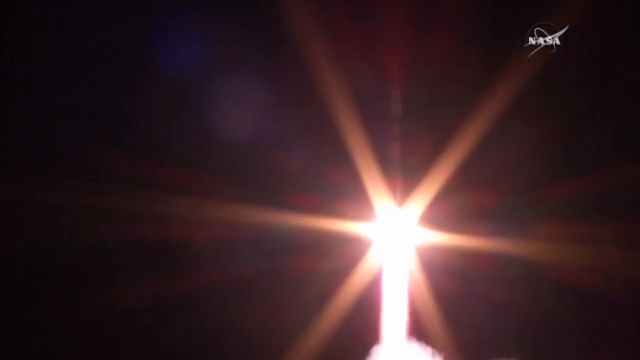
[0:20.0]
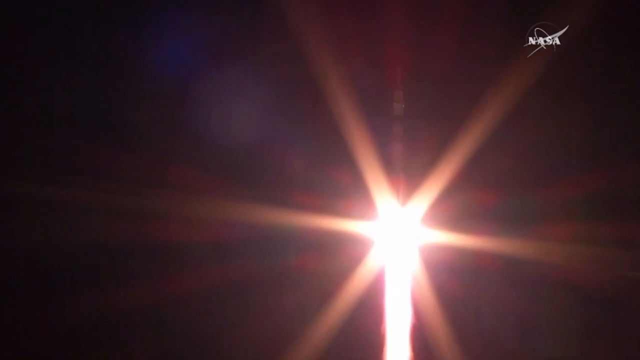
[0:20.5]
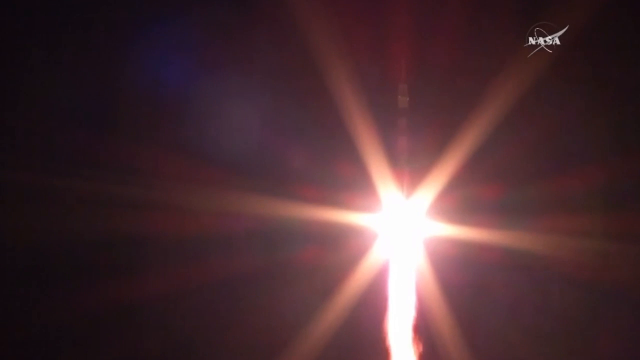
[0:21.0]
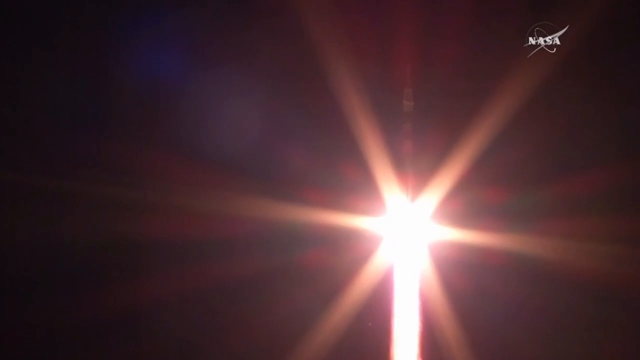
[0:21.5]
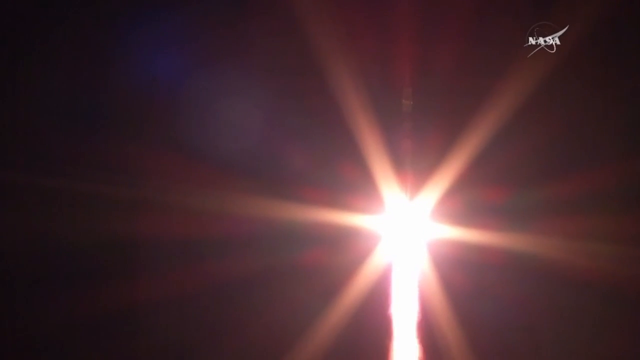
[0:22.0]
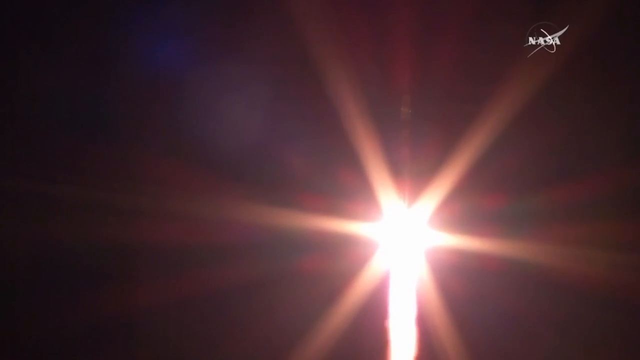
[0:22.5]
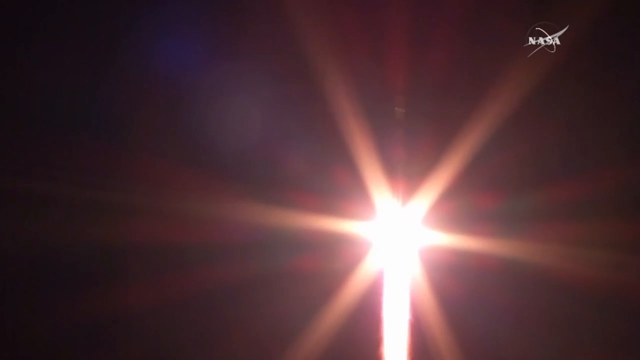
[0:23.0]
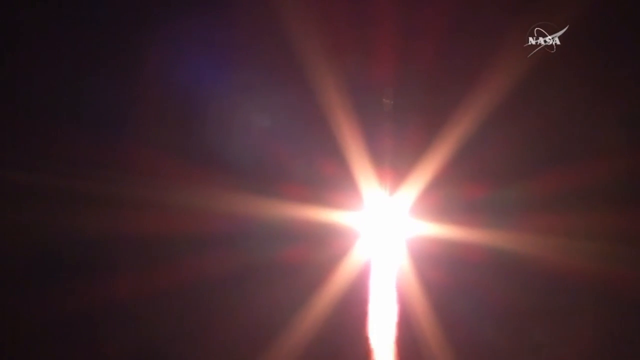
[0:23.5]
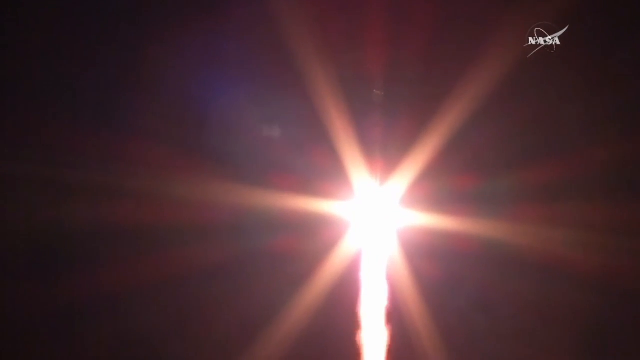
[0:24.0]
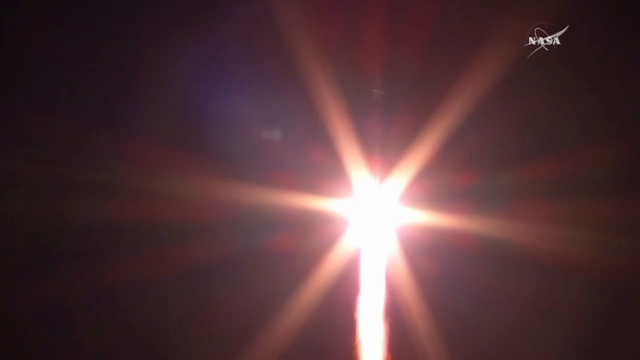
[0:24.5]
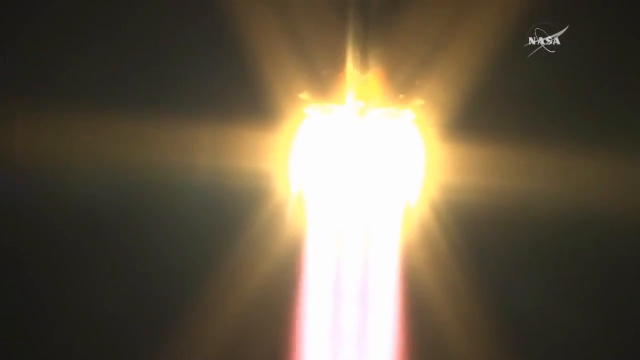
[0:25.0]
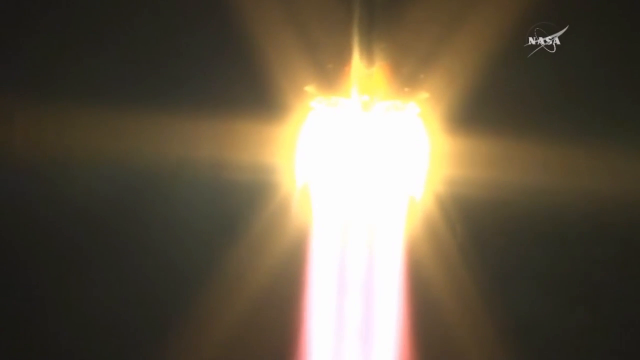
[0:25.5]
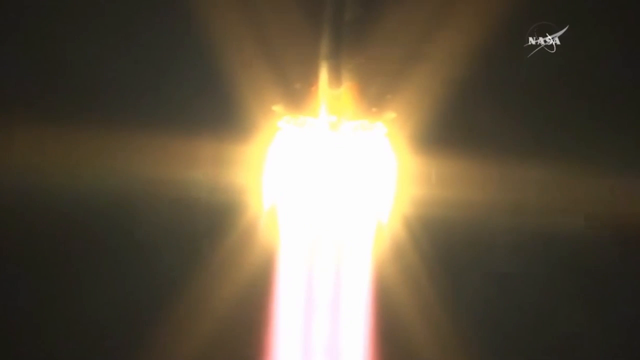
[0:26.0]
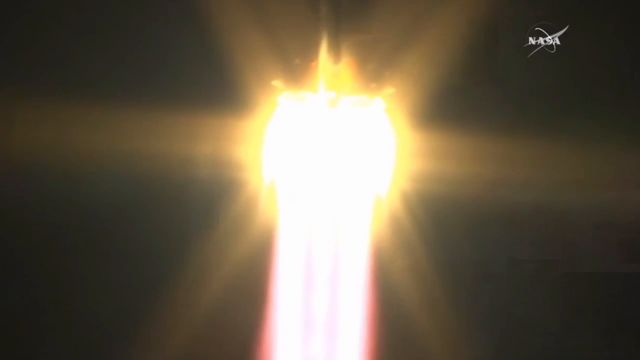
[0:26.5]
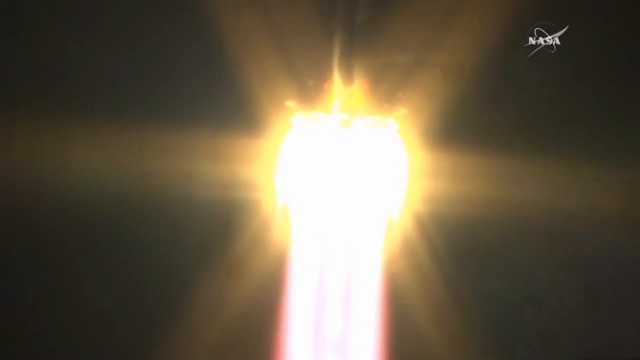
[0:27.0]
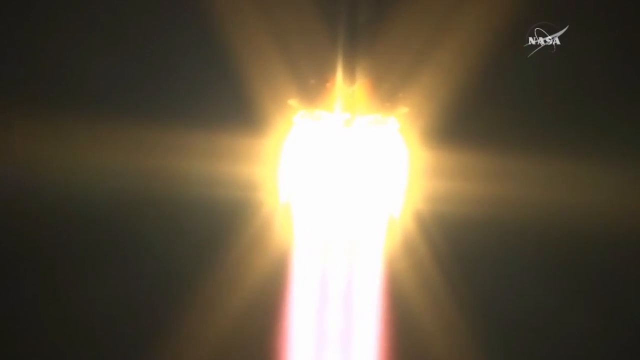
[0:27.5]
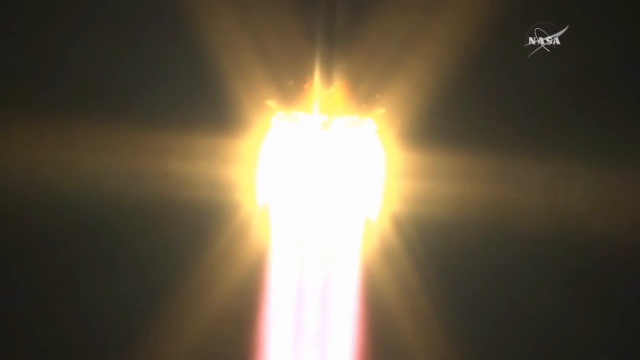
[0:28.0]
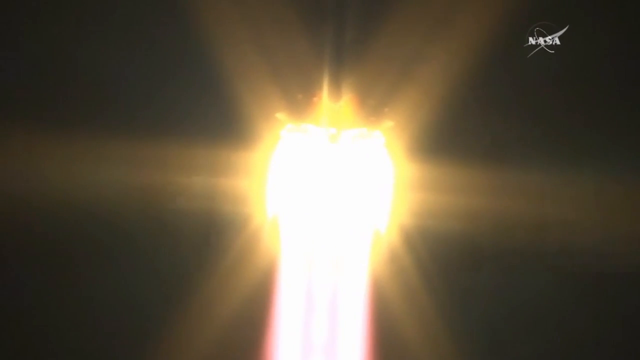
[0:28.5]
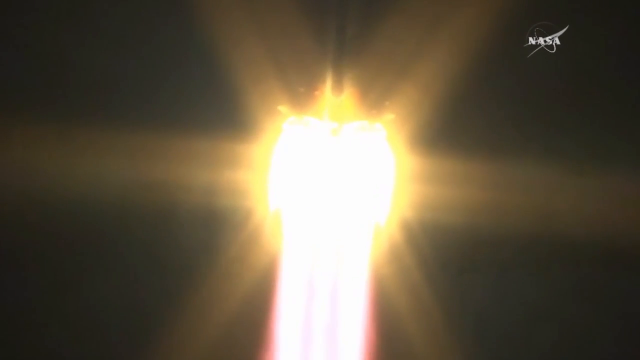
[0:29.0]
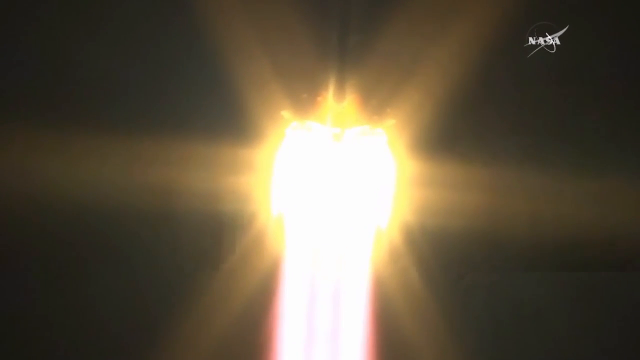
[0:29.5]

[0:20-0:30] A rocket ship goes up into the sky at night, with "NASA" on the screen. It looks like a bright star, or a burning star, shooting up in the sky, with flames and exhaust coming out of its back end. The light is bright orange and bright yellow.